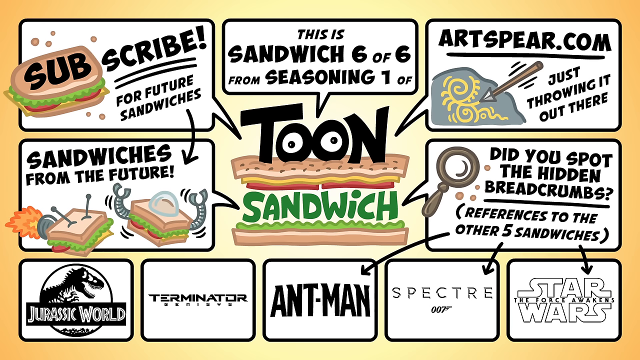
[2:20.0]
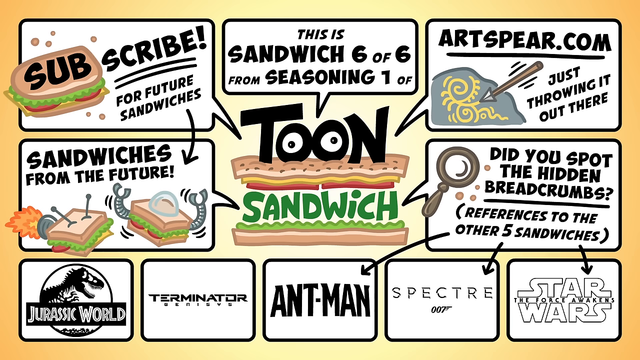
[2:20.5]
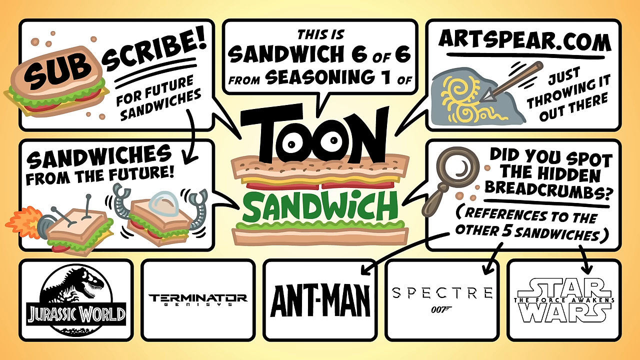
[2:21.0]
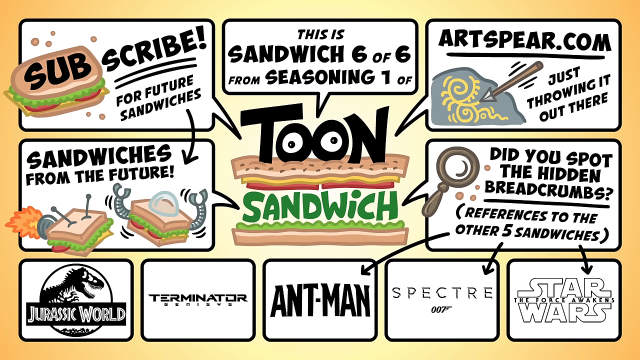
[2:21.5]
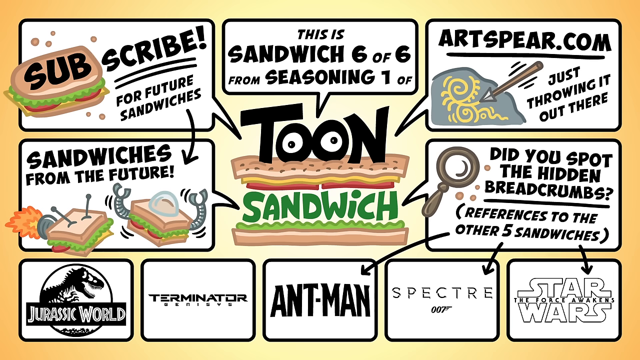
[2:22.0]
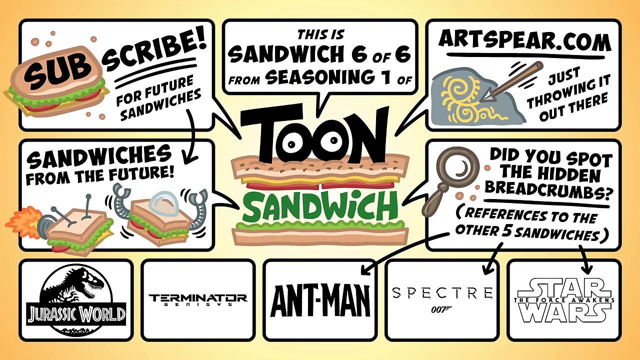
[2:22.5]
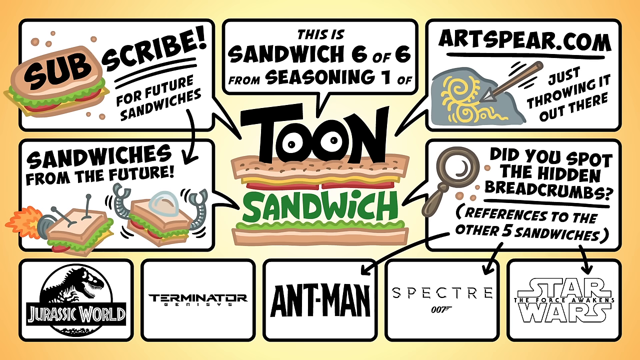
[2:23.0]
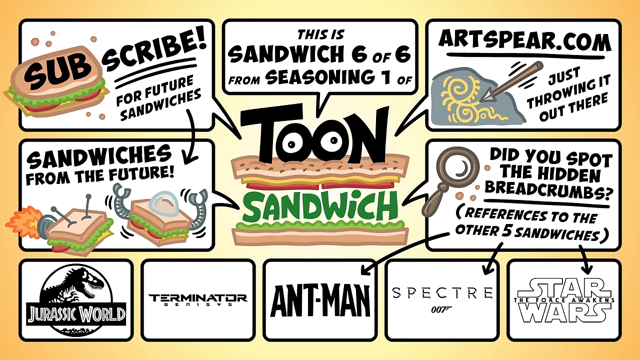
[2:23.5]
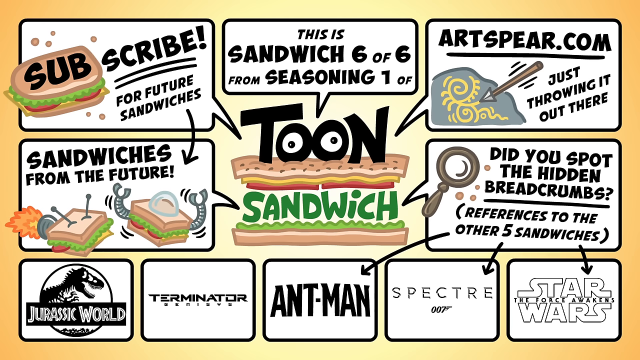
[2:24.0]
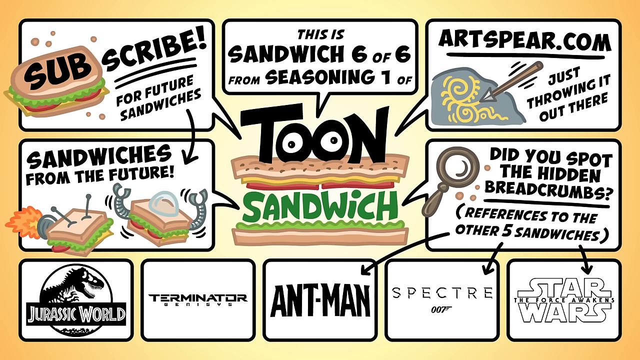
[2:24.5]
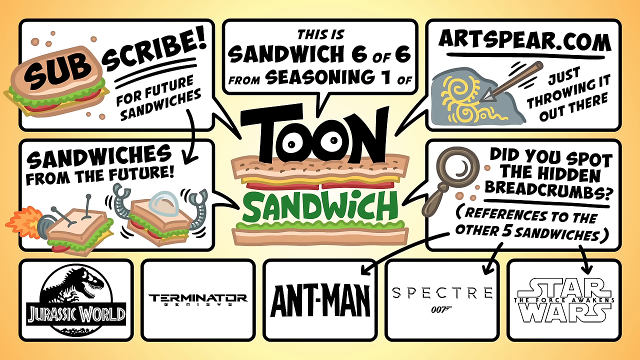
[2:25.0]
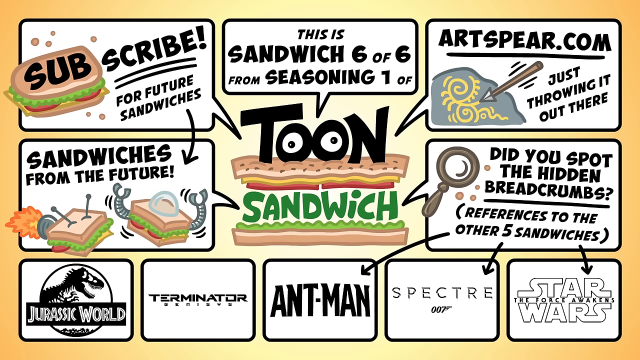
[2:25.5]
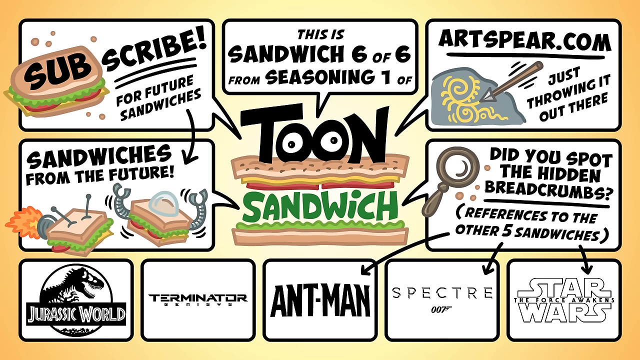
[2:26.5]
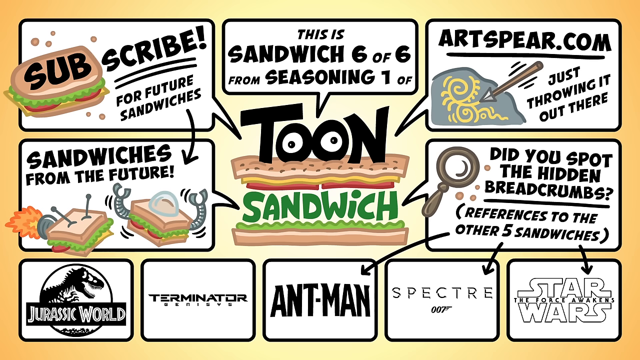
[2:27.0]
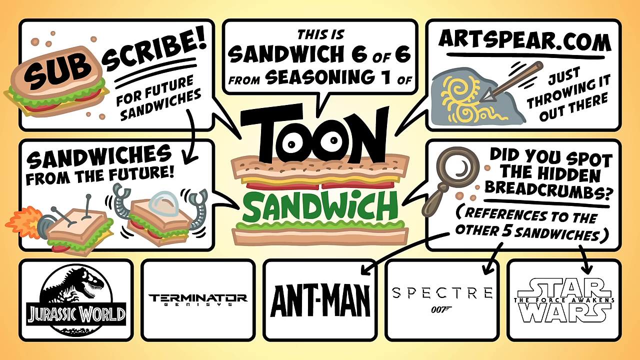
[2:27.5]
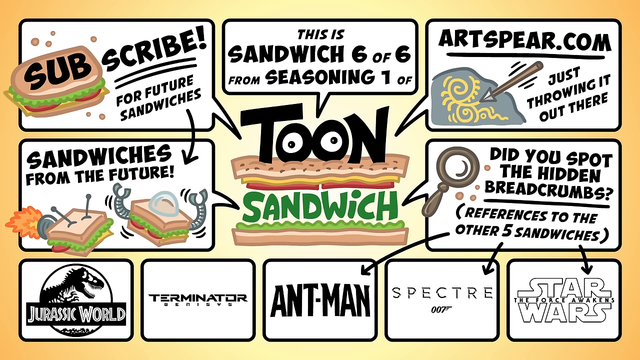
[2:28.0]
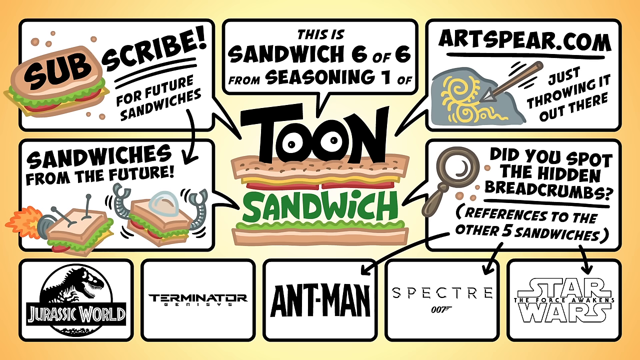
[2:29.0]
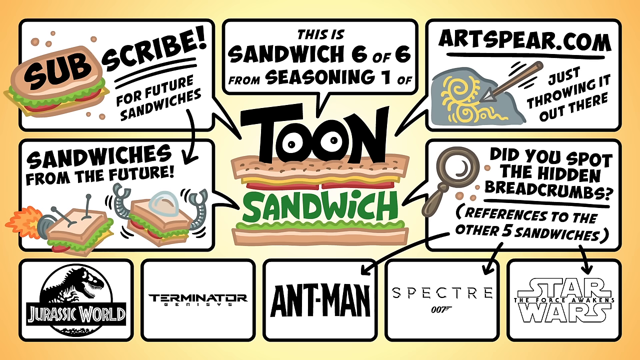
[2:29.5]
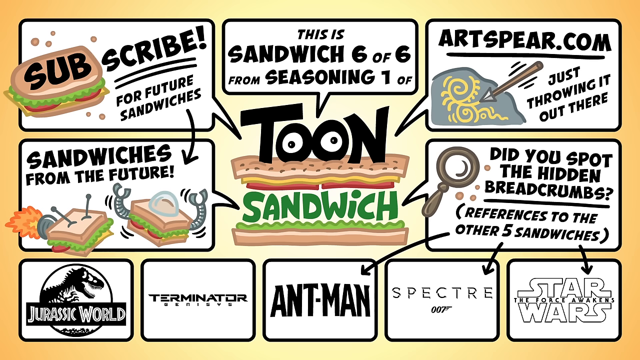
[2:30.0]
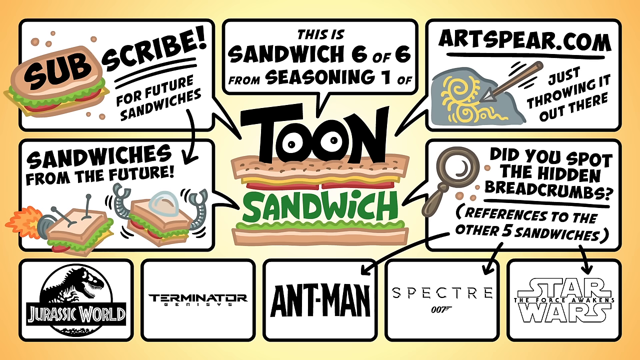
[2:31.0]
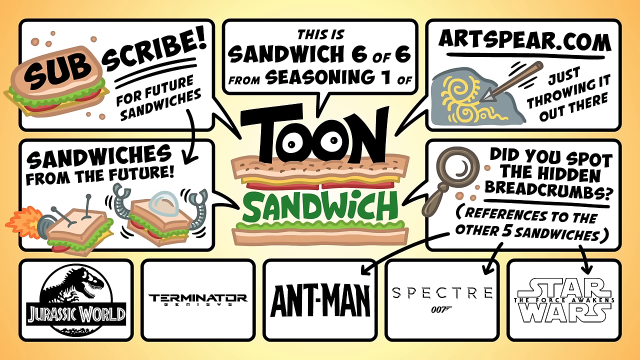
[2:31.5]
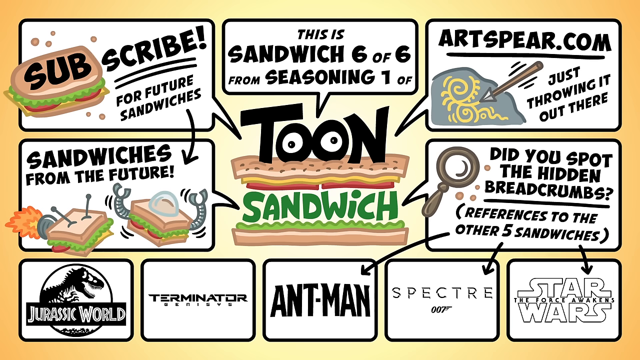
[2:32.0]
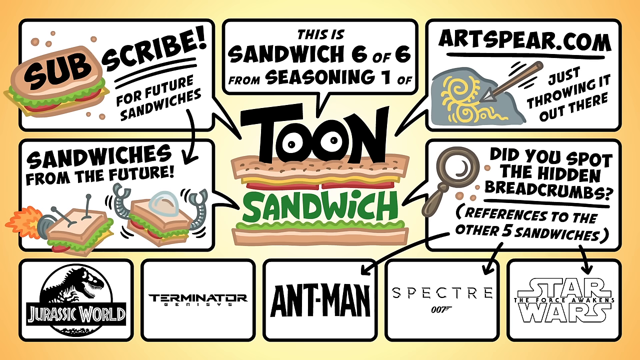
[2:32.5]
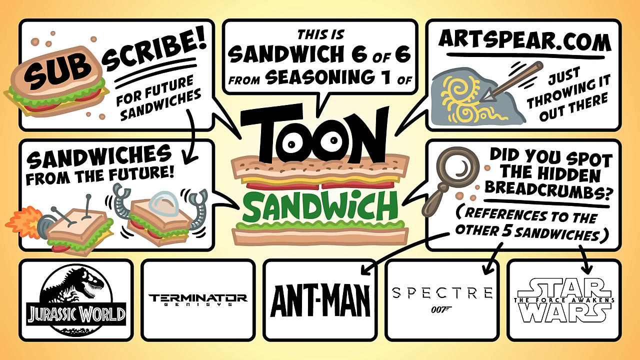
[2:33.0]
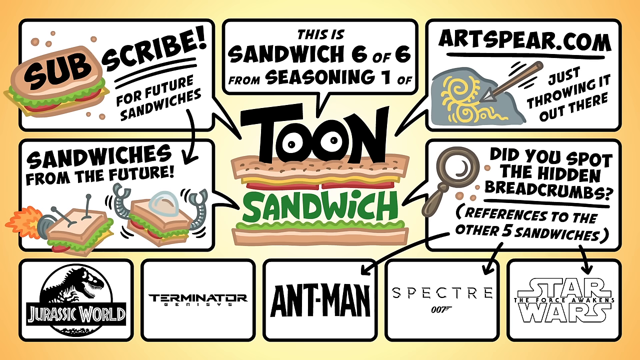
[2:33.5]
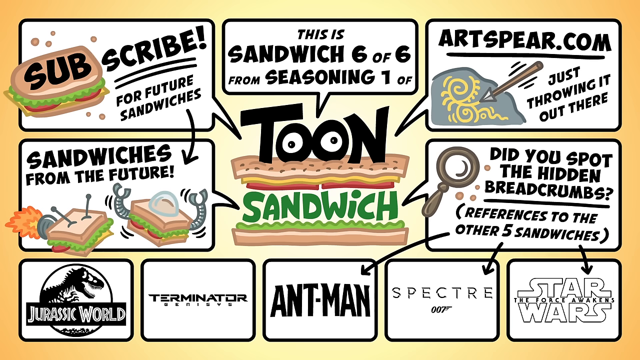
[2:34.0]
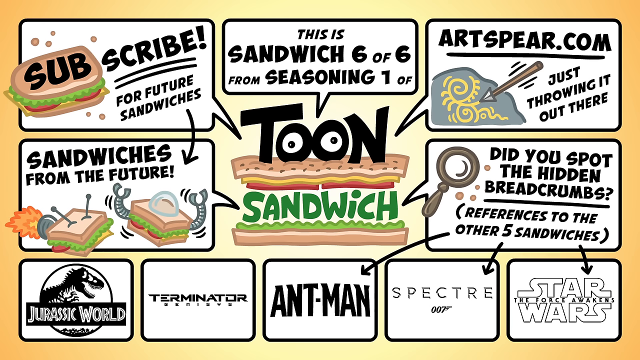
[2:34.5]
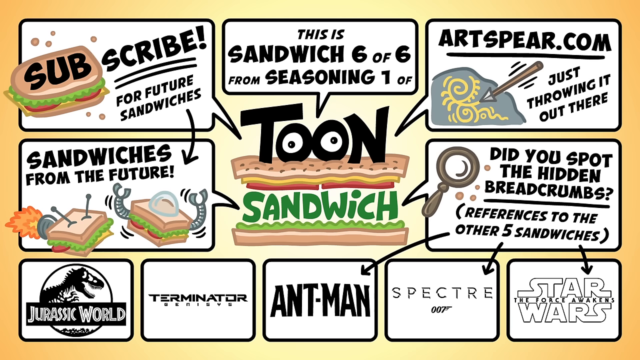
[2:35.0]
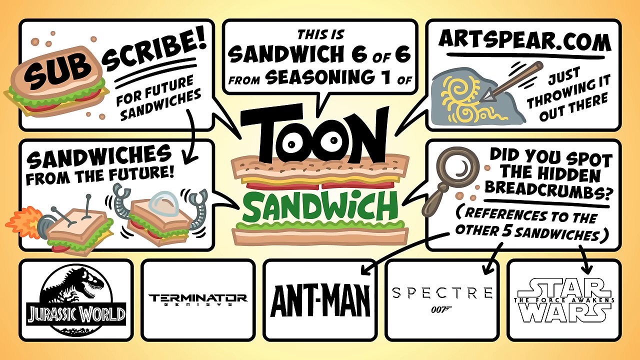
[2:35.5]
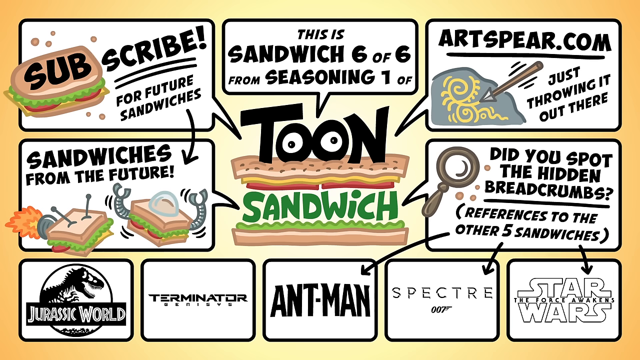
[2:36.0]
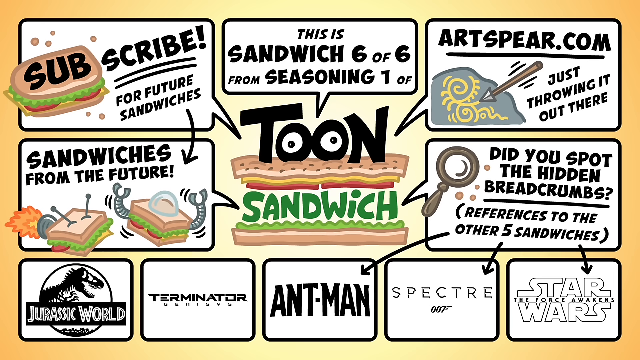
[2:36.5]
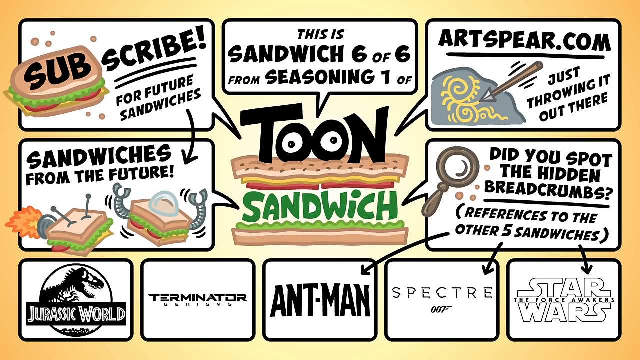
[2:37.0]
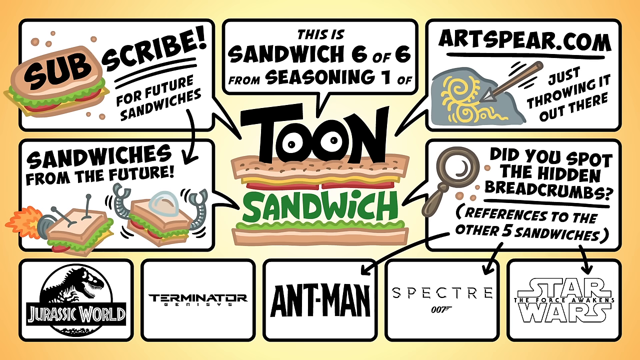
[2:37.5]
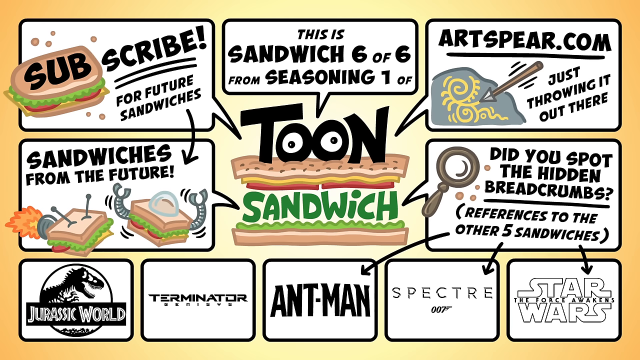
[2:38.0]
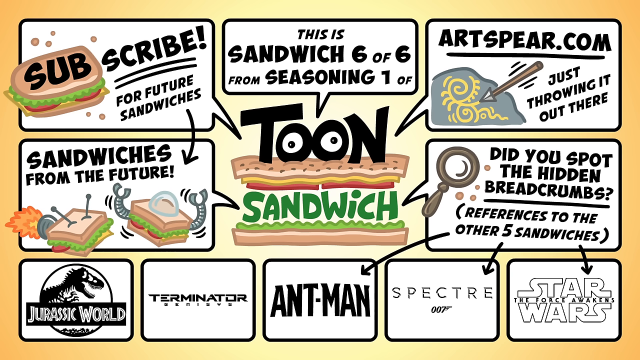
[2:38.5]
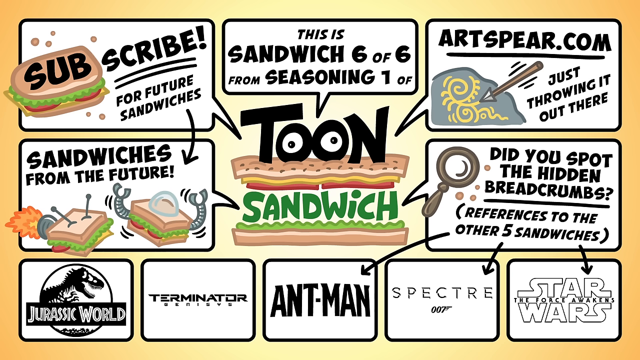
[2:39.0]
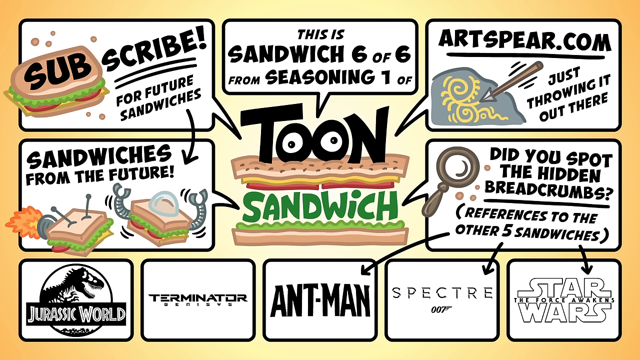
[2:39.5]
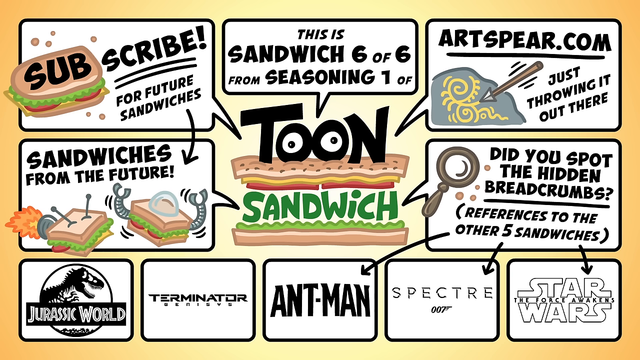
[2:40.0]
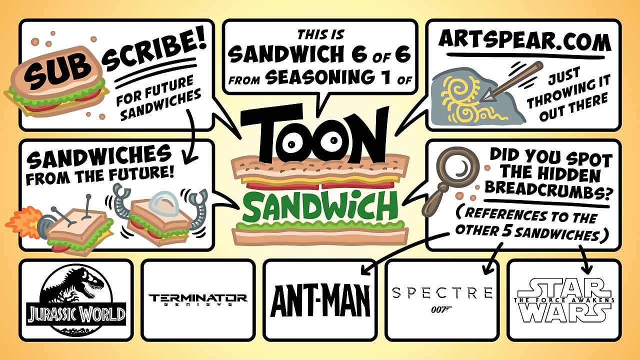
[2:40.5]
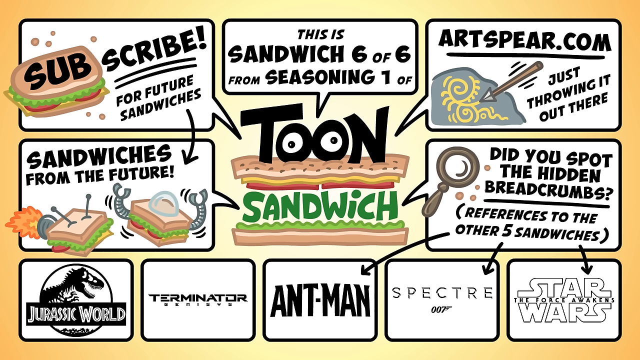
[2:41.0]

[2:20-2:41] Along the bottom of the screen are several logos: Jurassic World, Terminator Genesis, Ant-Man, Specter 007, and Star Wars The Force Awakens. Above them a message says "did you spot the hidden breadcrumbs? References to the other five sandwiches." In the upper right corner it says "artsphere.com, just throwing it out there," and in the middle it says "this is sandwich six of six from seasoning one." The screen has a yellow background. Each message is inside a bubble like a comic-book message window: a white rectangle outlined in black with an arrow coming out of its side, and all the arrows point at the logo in the middle, which says "Toon Sandwich" and is drawn so that the sandwich is the mouth and the two O's are the eyes.